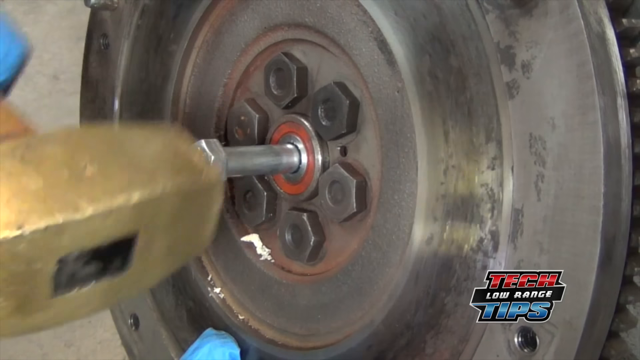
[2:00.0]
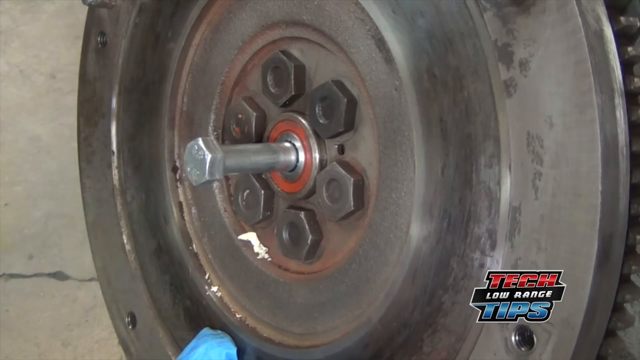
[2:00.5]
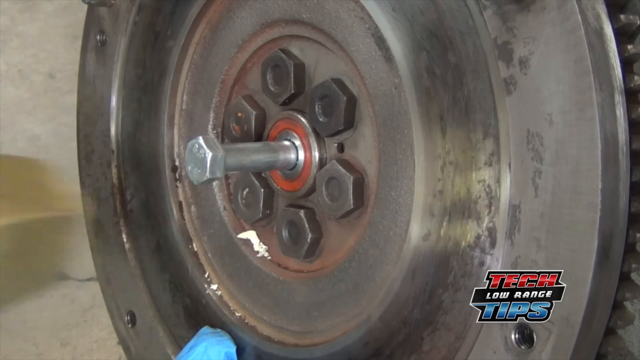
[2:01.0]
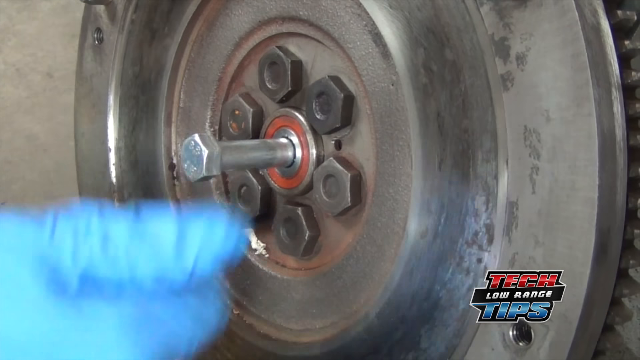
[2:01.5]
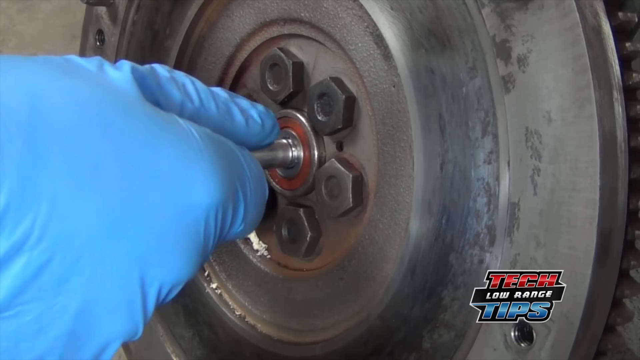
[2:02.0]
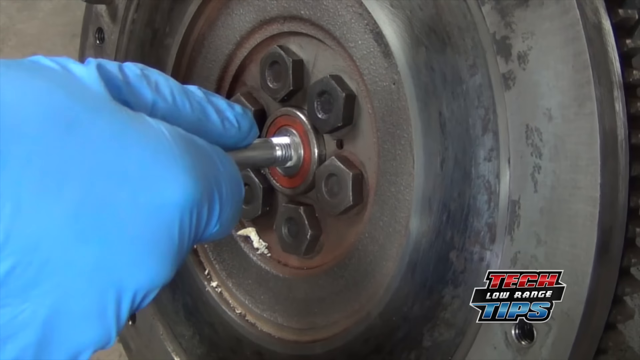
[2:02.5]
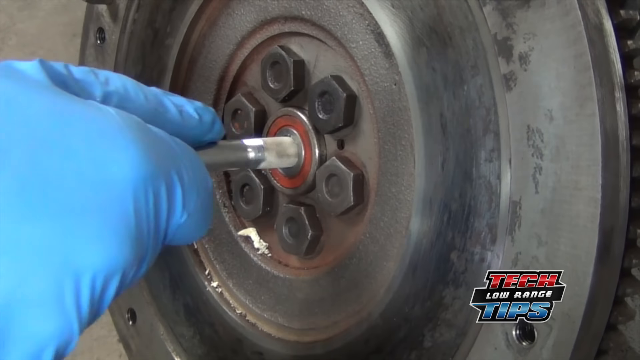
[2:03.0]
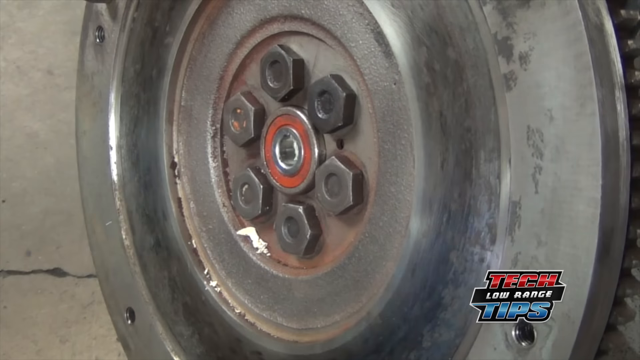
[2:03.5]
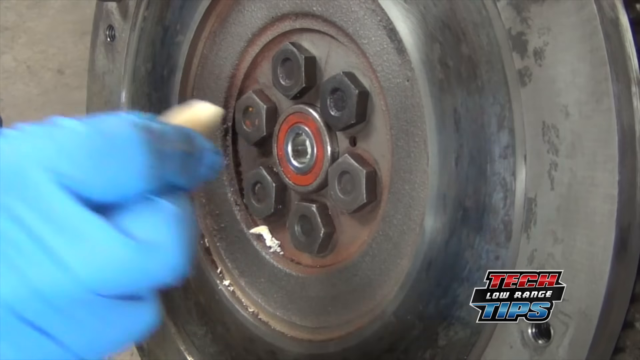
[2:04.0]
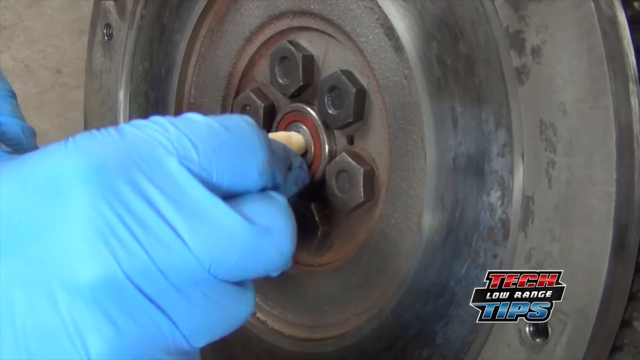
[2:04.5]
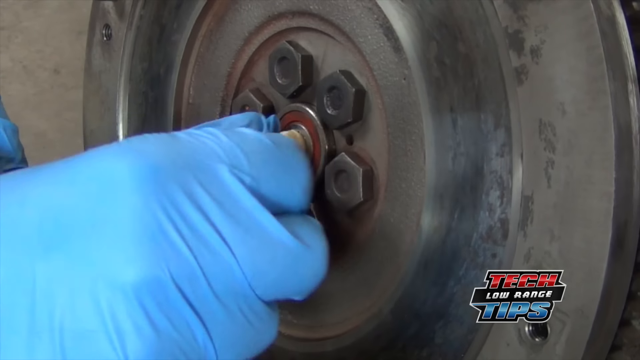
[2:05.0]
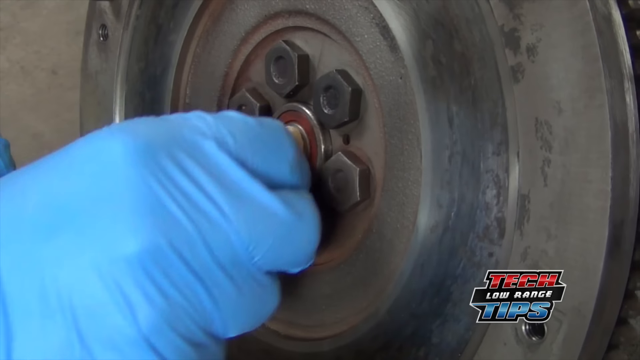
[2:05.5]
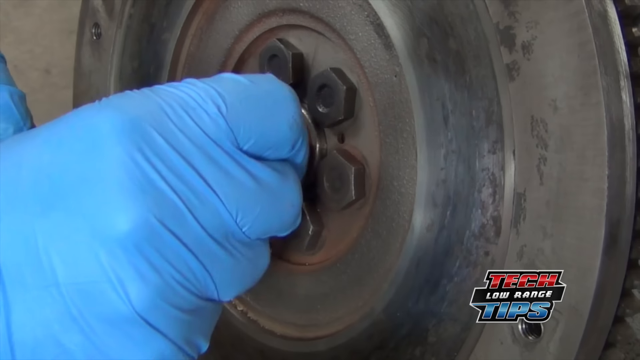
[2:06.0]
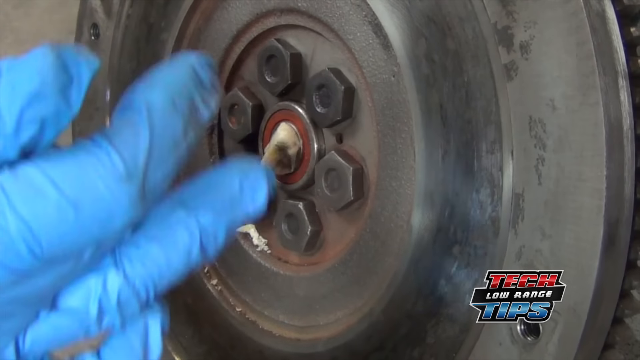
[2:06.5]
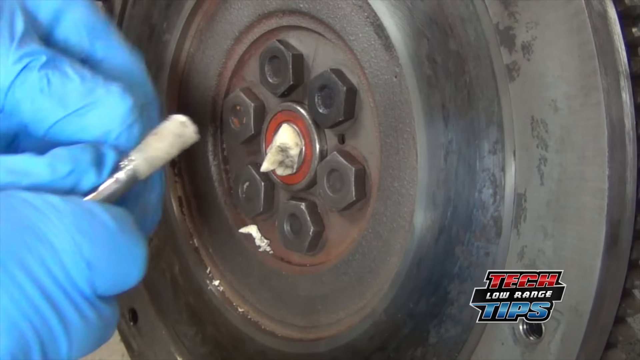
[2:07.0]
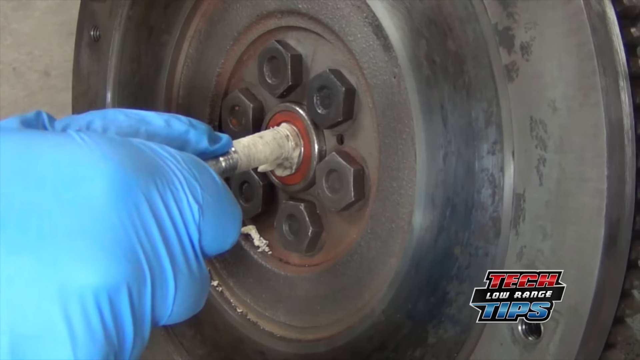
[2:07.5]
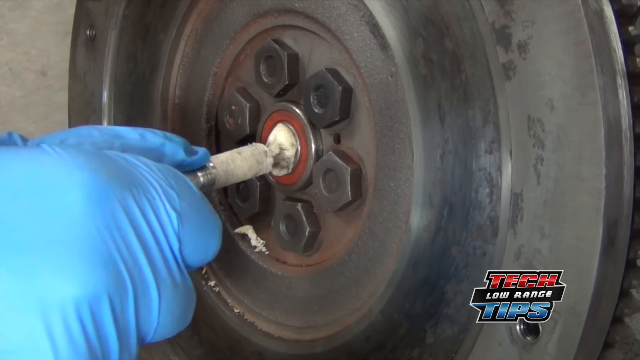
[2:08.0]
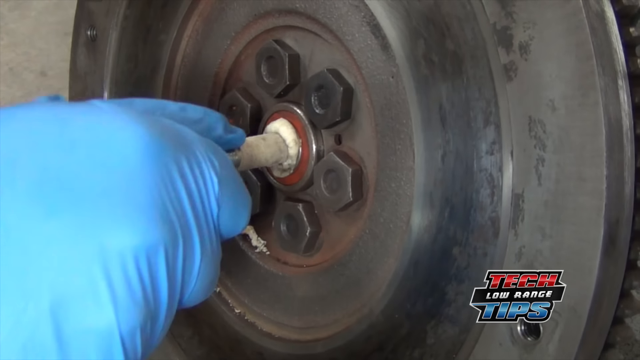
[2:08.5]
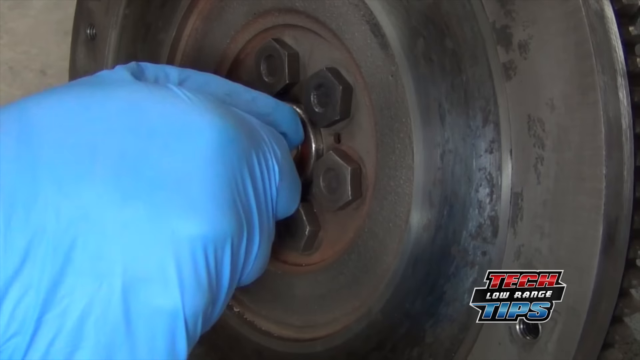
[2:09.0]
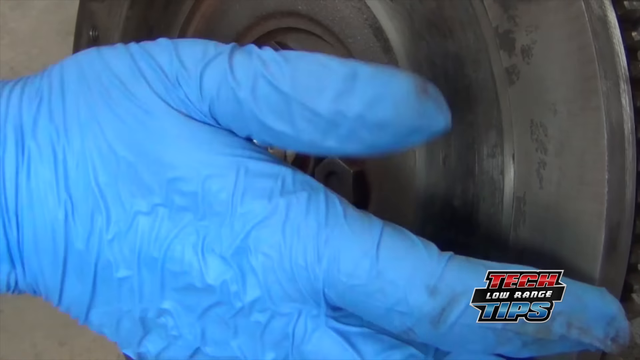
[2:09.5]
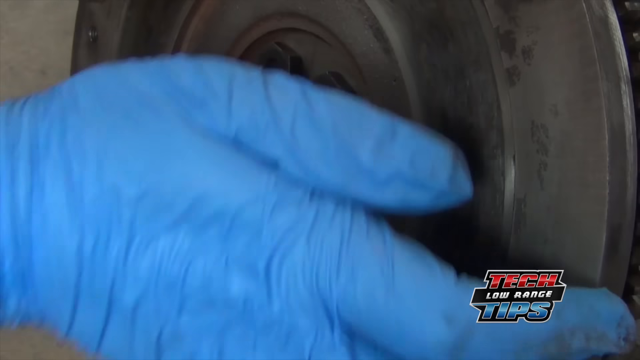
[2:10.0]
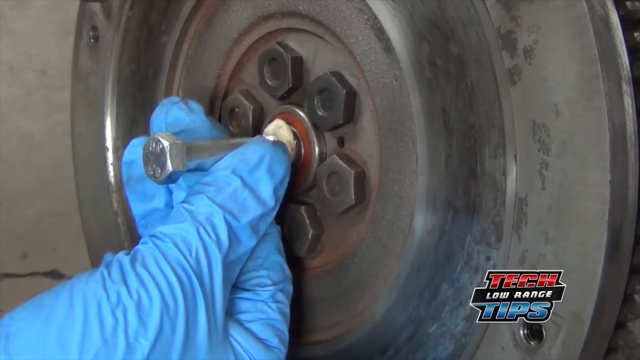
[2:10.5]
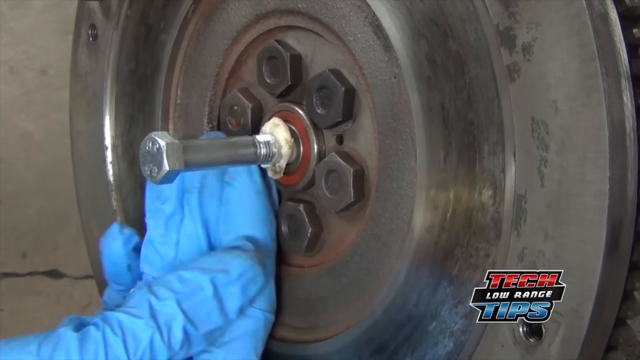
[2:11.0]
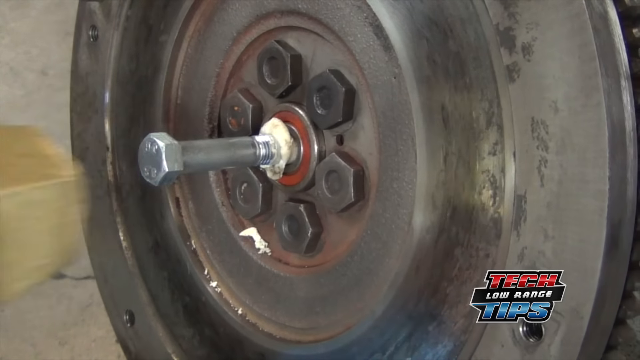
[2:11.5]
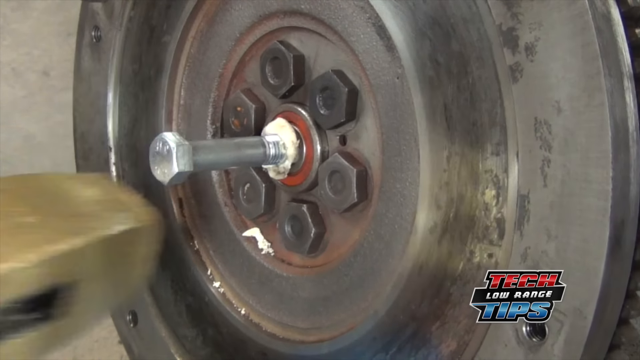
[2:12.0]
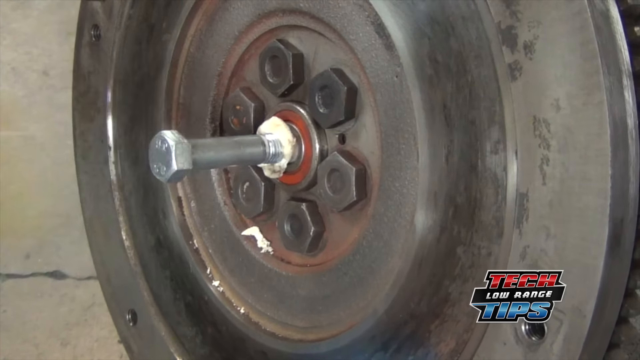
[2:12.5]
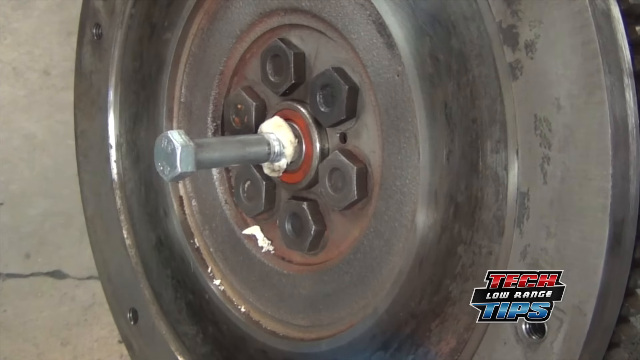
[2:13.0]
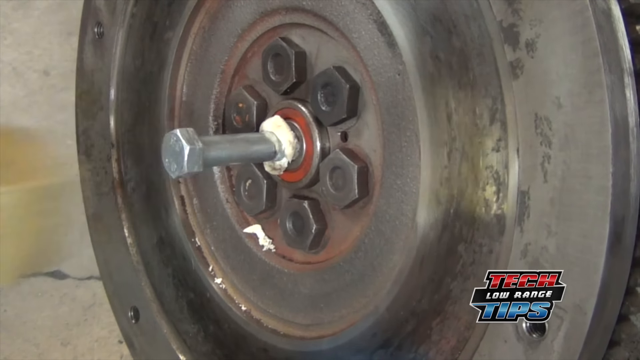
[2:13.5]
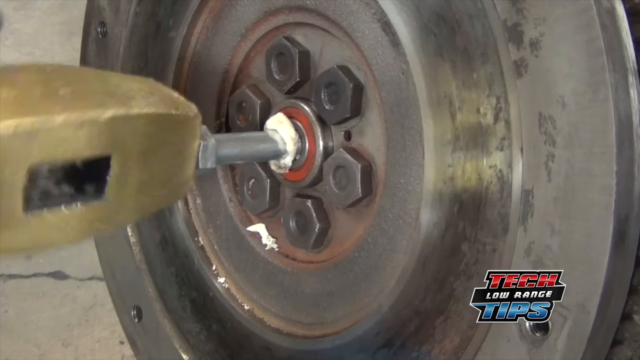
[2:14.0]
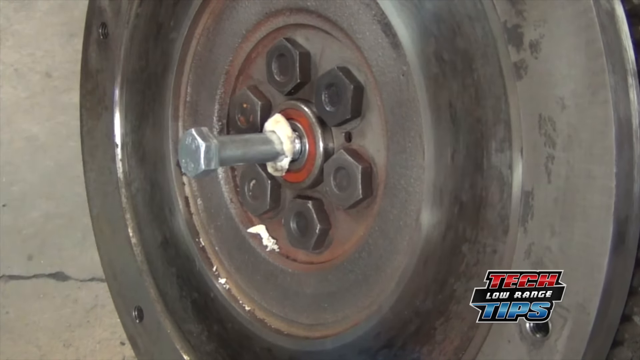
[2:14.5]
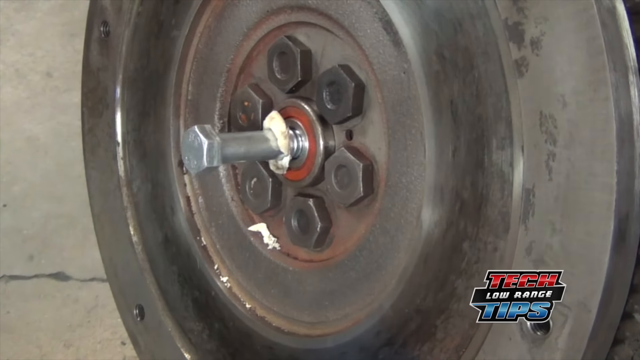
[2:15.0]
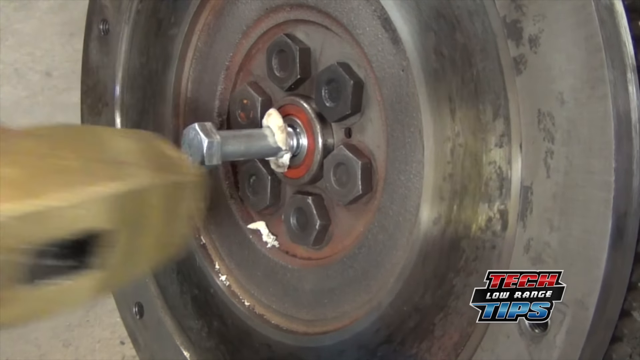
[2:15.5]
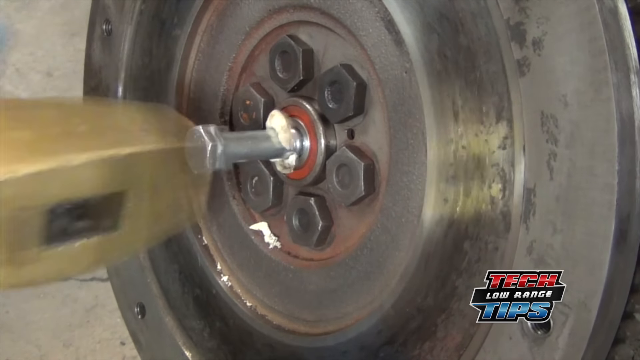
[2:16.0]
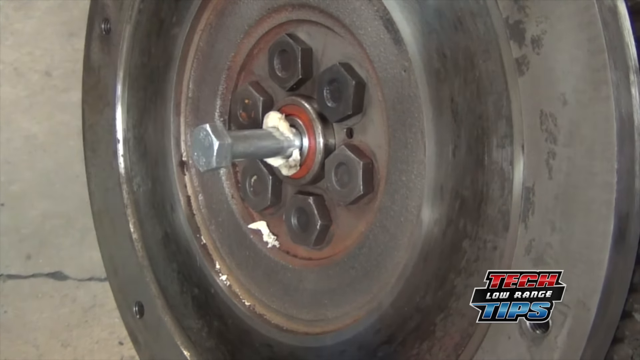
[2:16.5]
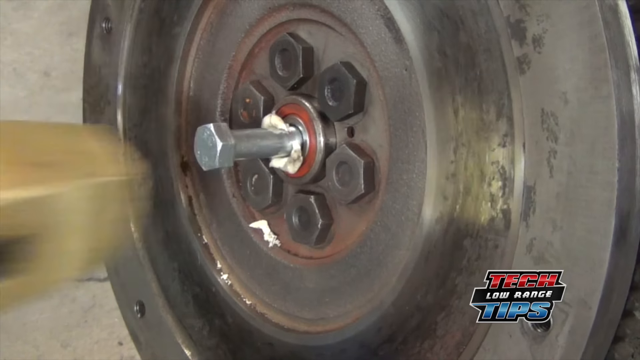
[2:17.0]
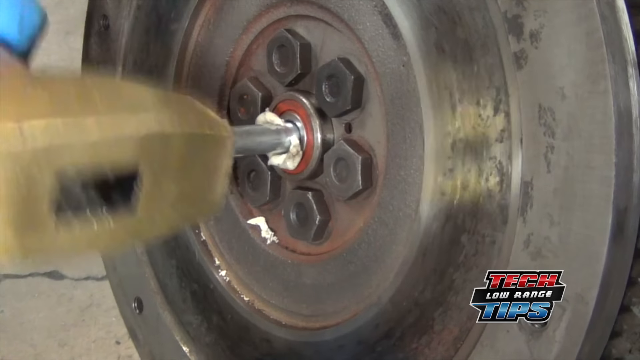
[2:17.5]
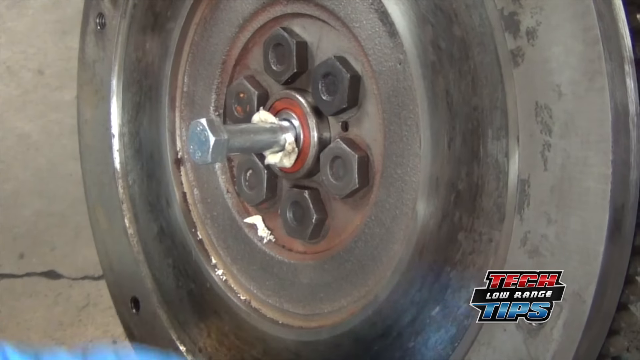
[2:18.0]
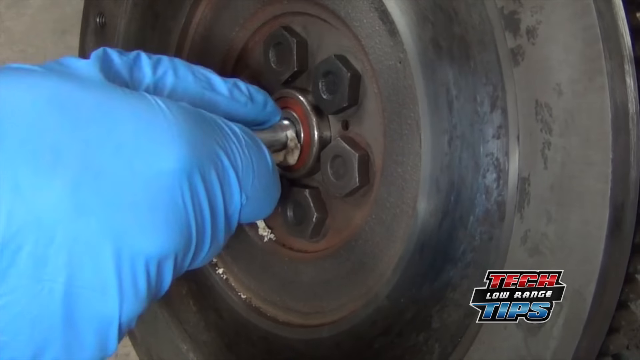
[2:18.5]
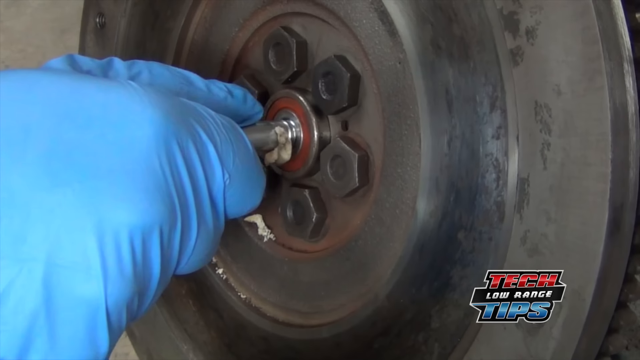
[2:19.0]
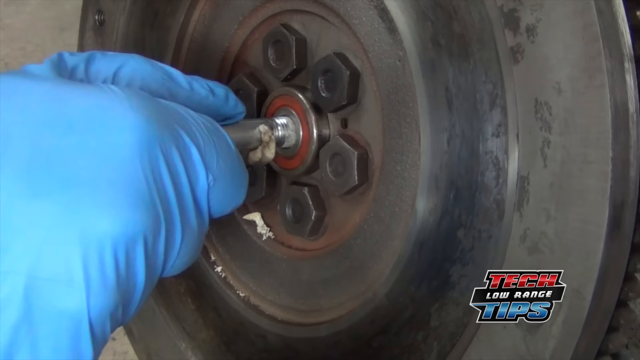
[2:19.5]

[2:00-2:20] The text "tech low range tips" appears. A circular, rim-looking metal object has a nail in the middle, and the nail is hammered repeatedly. Someone wearing a blue glove pulls the nail out, puts some little dough-looking material back in the hole, puts the screw on top of it and presses it in. They hammer again several times, and shortly before the shot ends they pull the screw back out. The setting possibly looks like a mechanic shop or car shop.